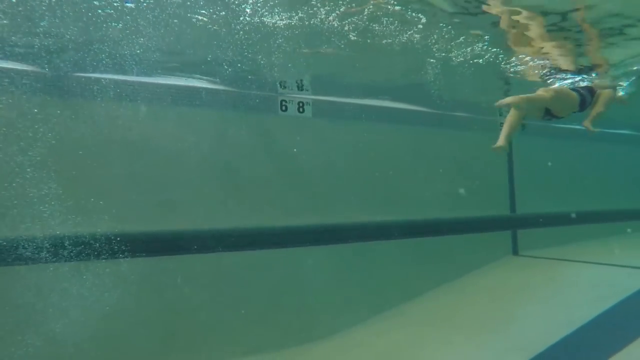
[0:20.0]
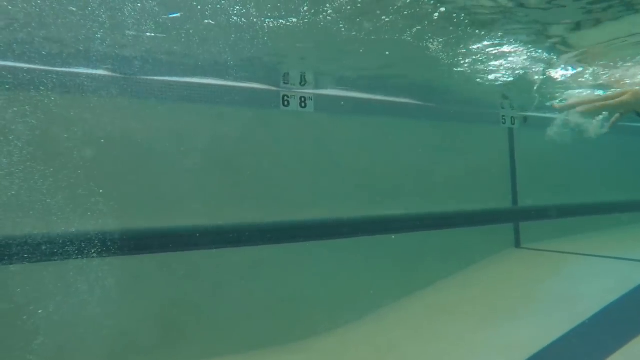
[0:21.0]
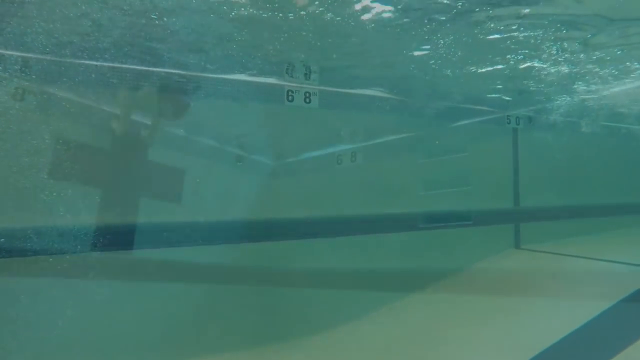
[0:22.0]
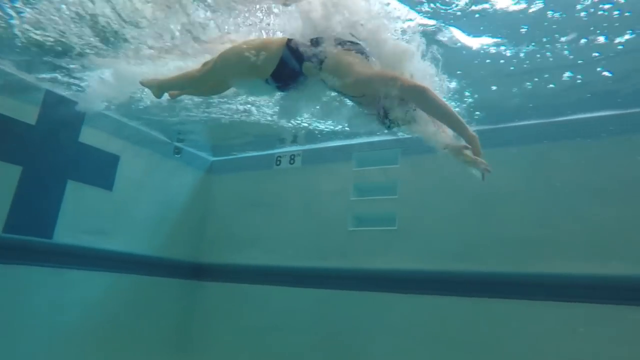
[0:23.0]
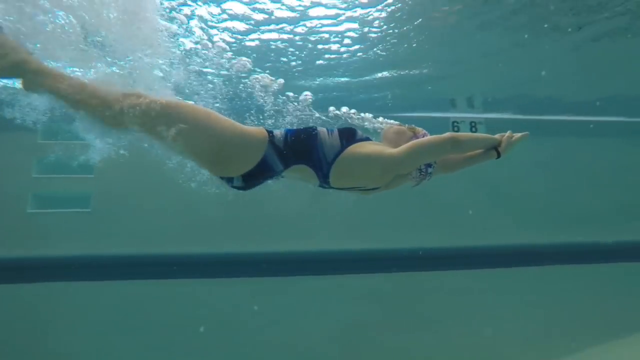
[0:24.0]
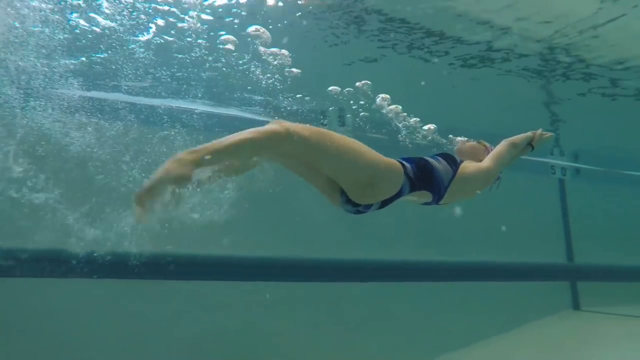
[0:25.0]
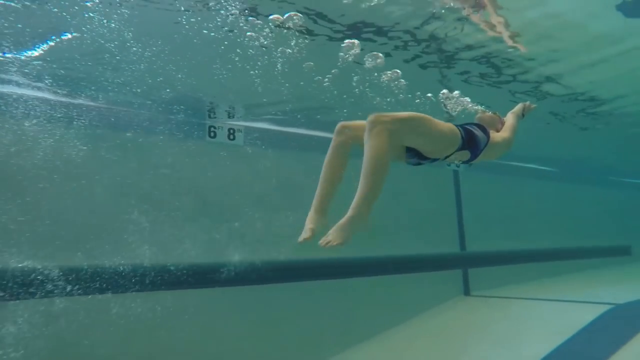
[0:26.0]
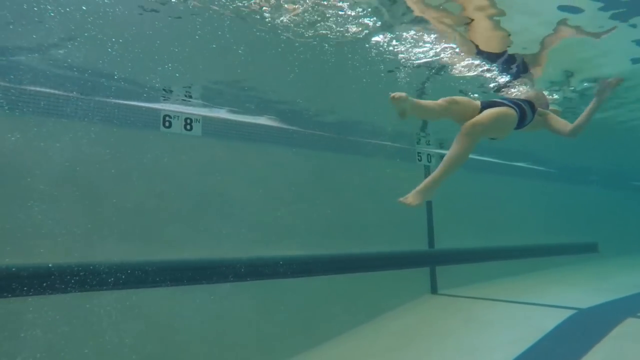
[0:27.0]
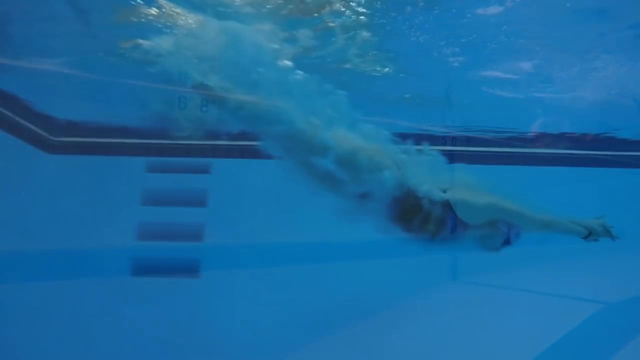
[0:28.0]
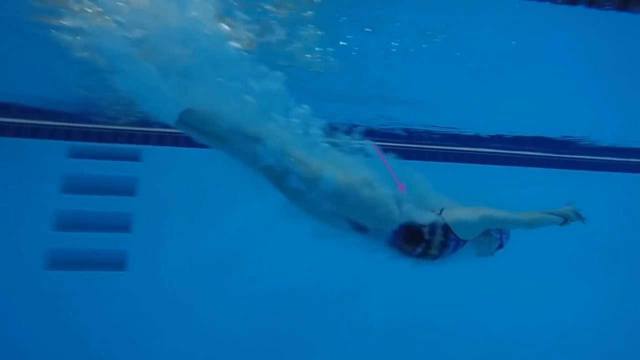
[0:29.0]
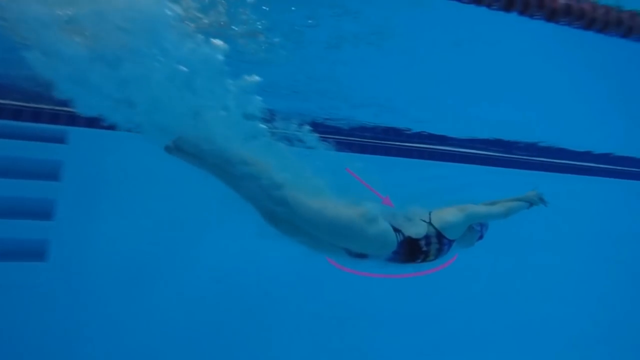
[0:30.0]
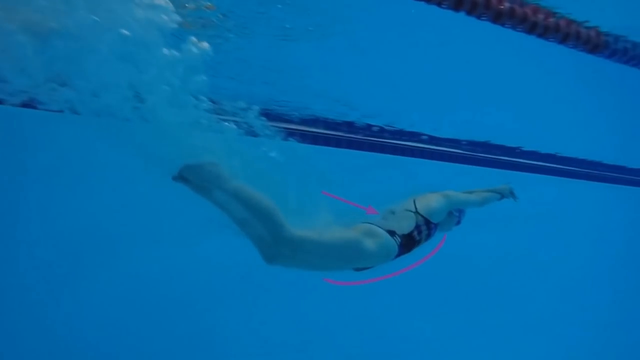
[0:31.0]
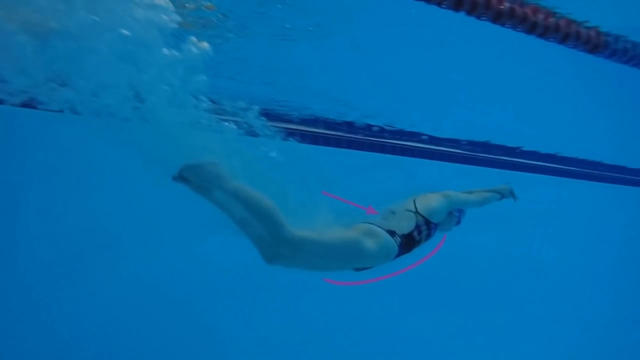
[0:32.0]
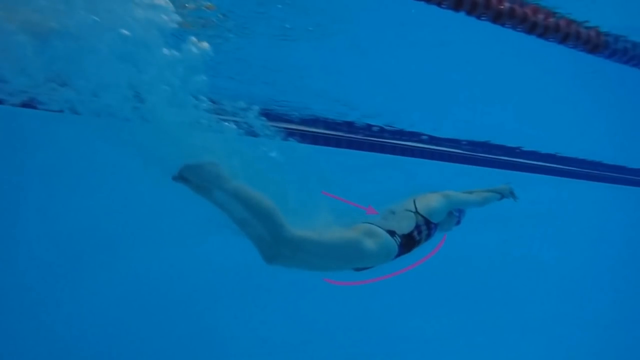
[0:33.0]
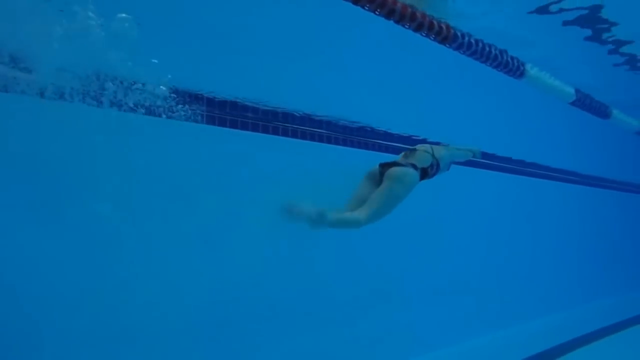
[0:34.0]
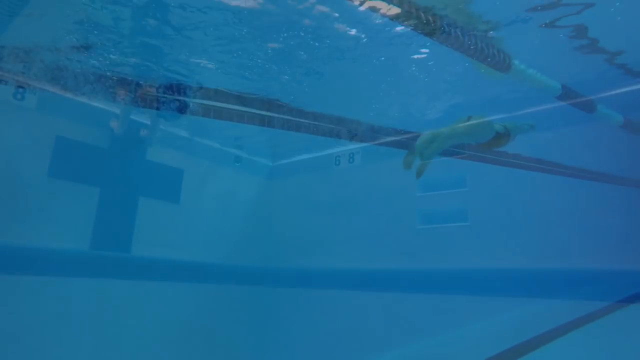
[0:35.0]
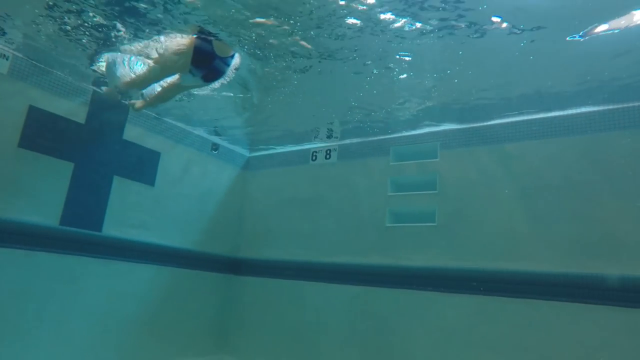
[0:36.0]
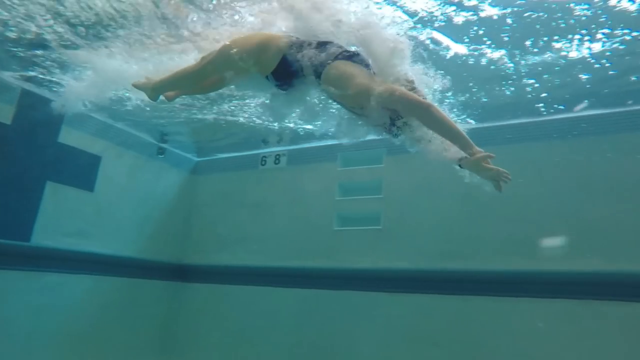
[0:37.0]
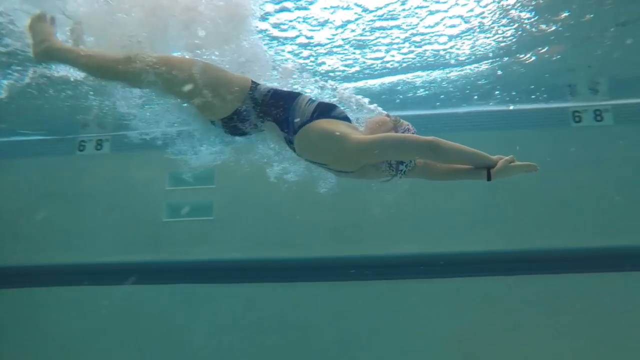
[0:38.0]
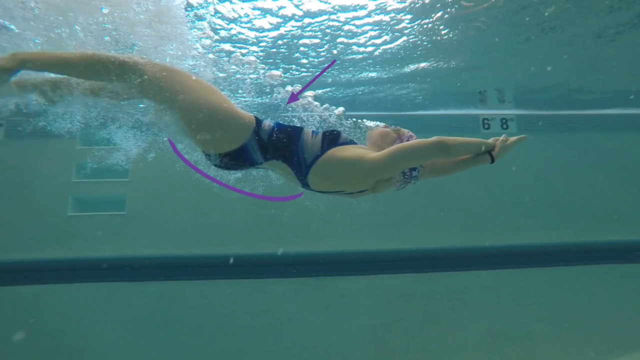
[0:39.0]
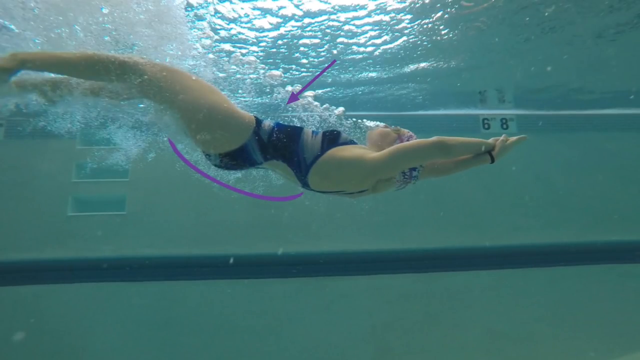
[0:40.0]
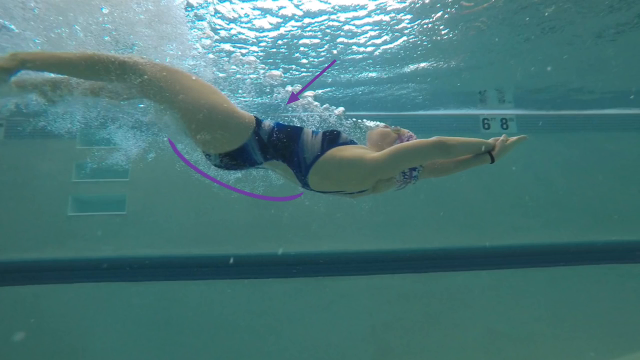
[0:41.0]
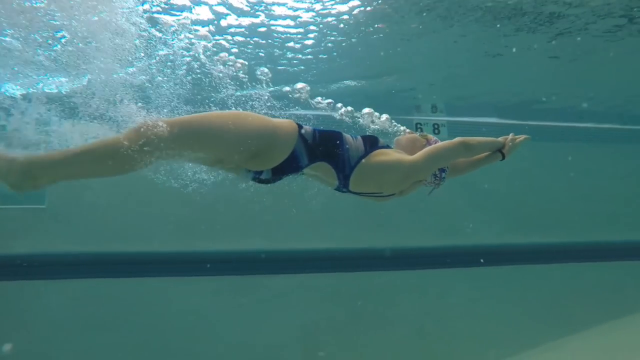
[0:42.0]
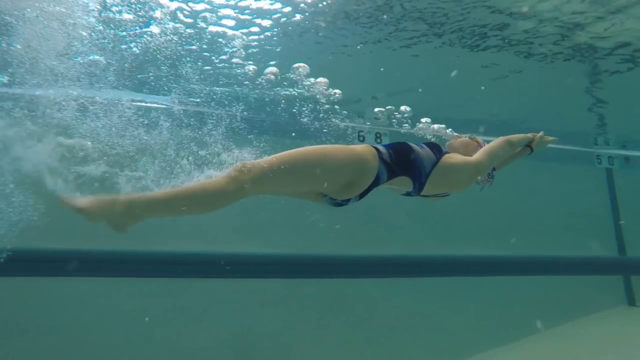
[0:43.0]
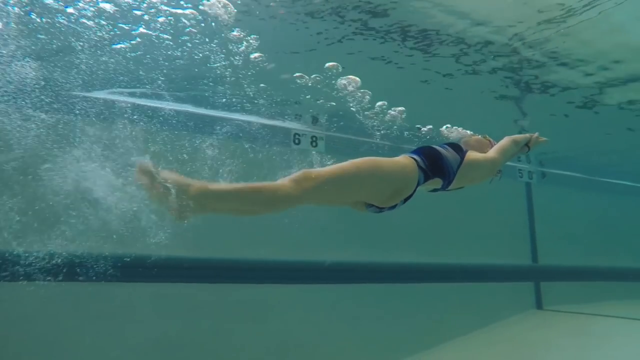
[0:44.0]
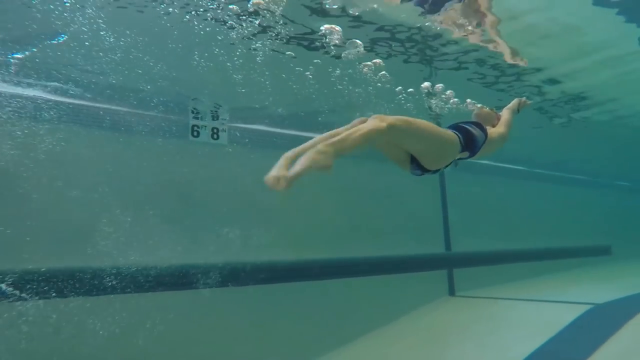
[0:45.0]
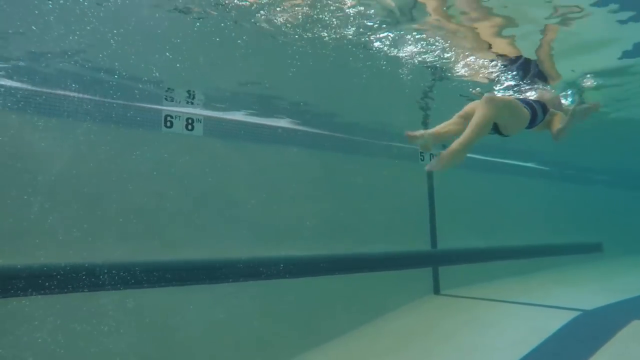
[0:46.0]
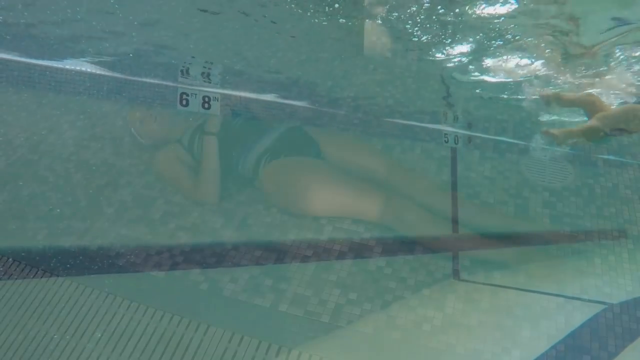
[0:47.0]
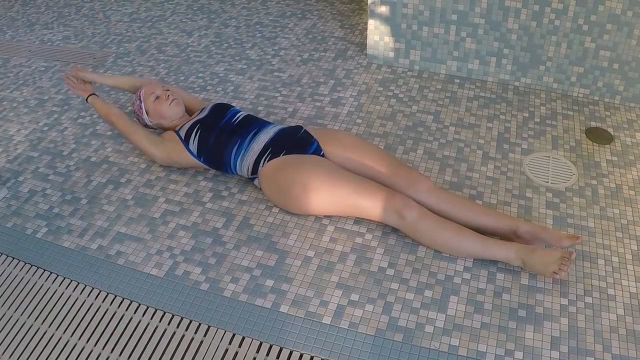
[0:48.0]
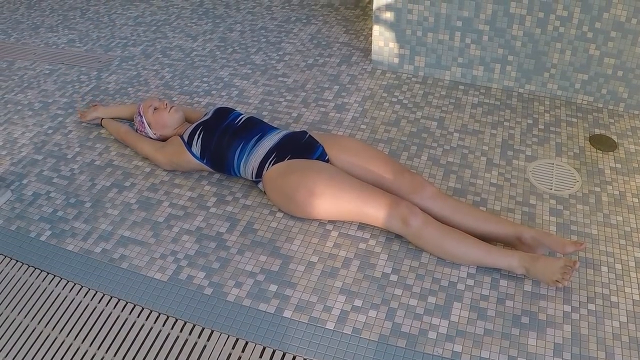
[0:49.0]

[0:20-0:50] The female swimmer in the one-piece suit does another backward dive into the pool. She starts with her feet pressed against the wall and her hands outstretched on the ledge of the pool, then projects herself backward into the water with her hands outstretched above her head. As she hits the water her back is toward the pool floor and her face is up toward the surface. She goes deeper into the water and eventually curves her body almost like a U or a V upward toward the surface. The video cuts to the same swimmer in a different position, showing how her body would arc toward the surface in a normal dive, with her belly pointed toward the bottom of the pool and her back toward the surface. This footage is in slower motion and shows her spine curving in a U shape as her body moves upward in the water. A pink underline appears underneath her belly and a pink arrow points toward the arch in her back. The video then cuts back to the original scene of the swimmer with the same arch and arrow, but now the arrow points at her midsection and a curved pink-purple line runs along her backside.